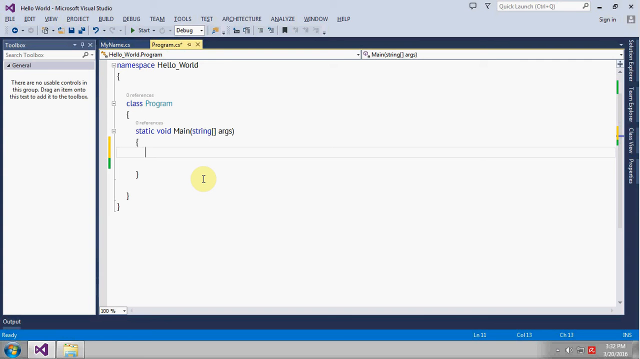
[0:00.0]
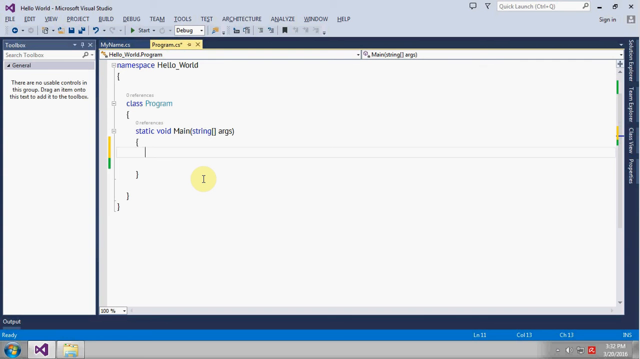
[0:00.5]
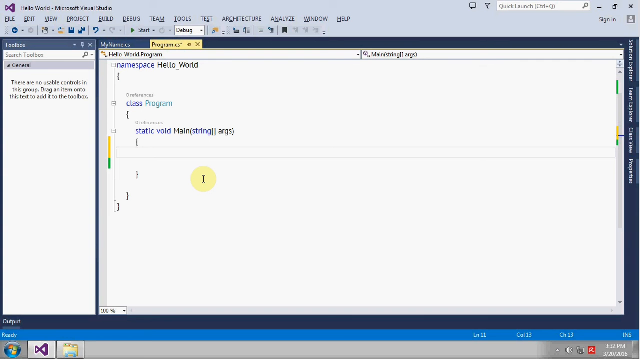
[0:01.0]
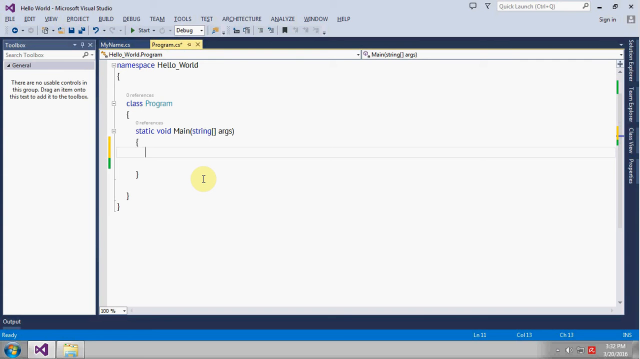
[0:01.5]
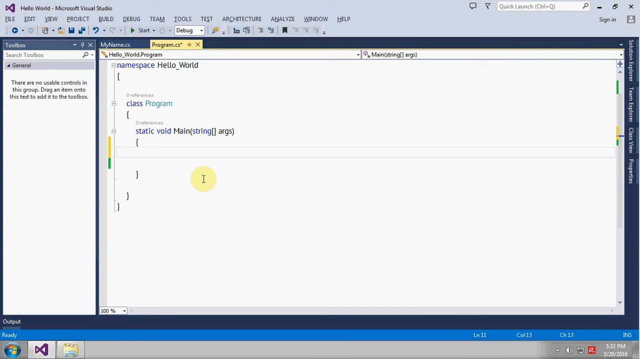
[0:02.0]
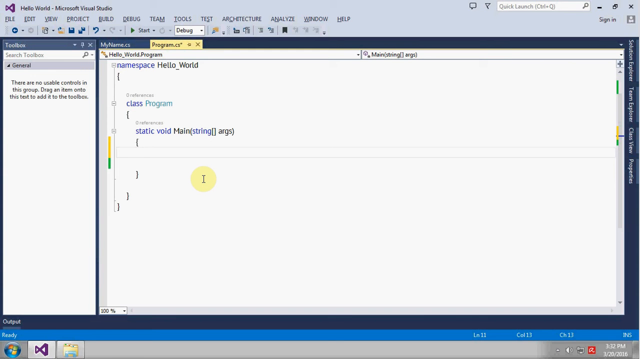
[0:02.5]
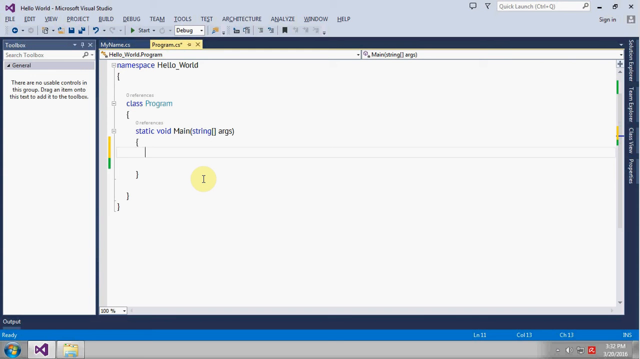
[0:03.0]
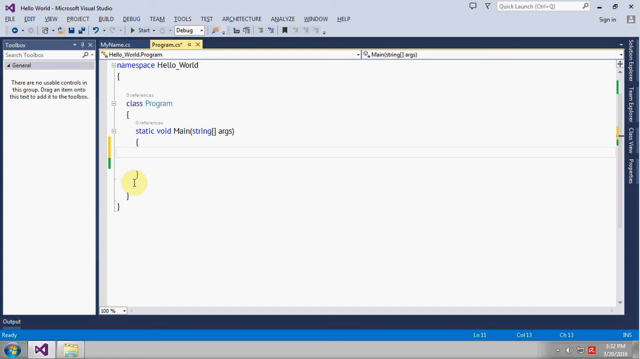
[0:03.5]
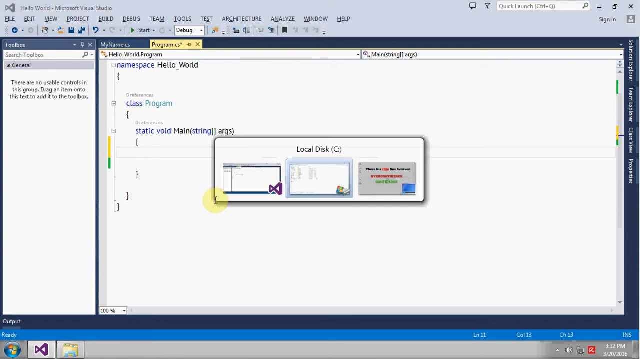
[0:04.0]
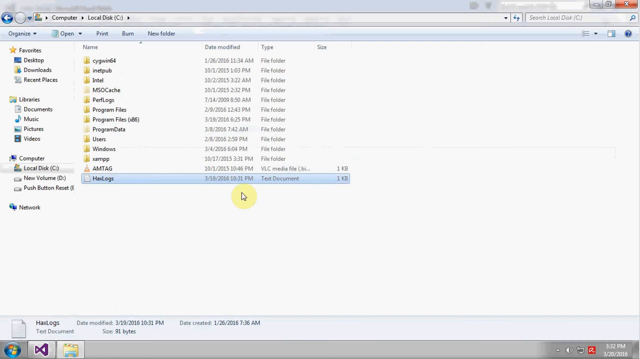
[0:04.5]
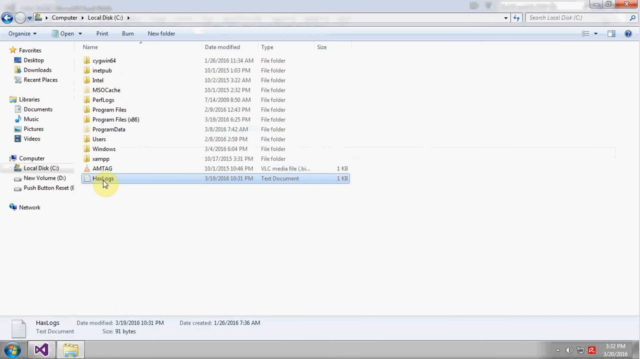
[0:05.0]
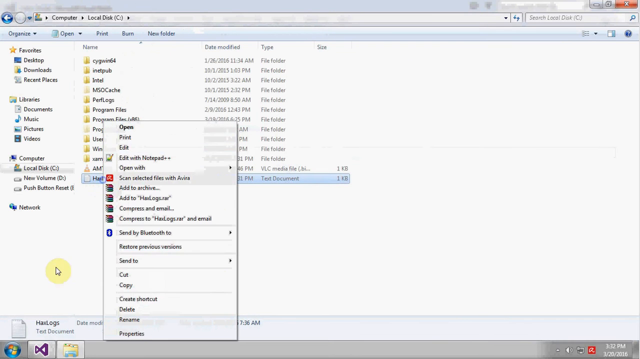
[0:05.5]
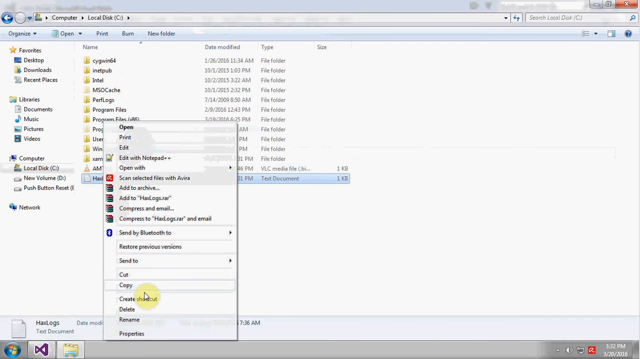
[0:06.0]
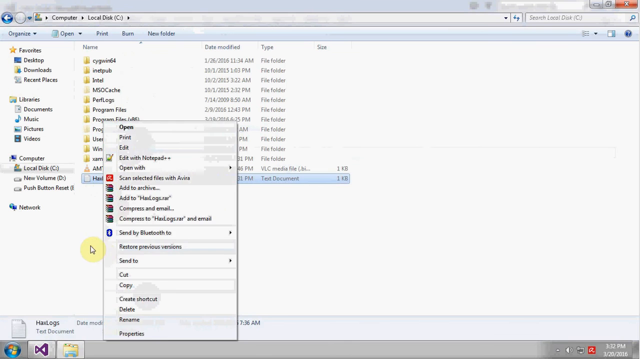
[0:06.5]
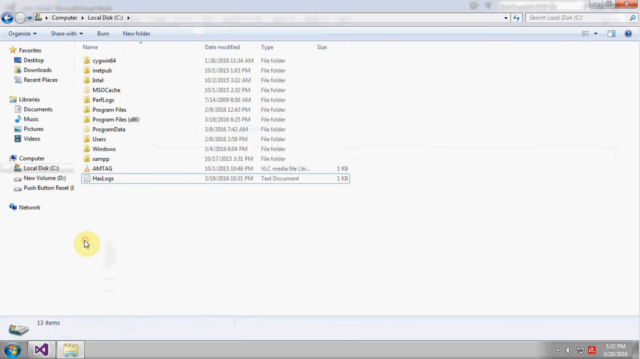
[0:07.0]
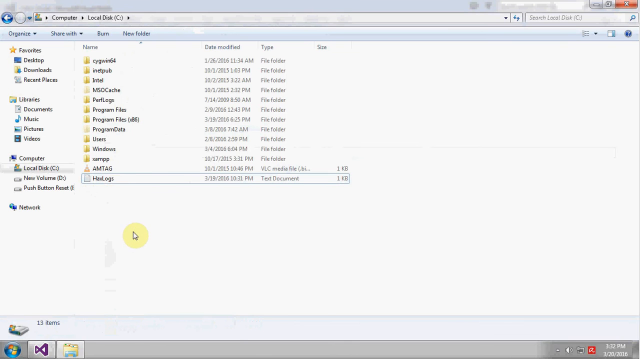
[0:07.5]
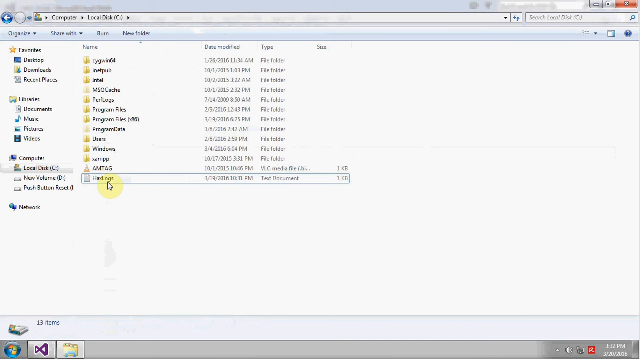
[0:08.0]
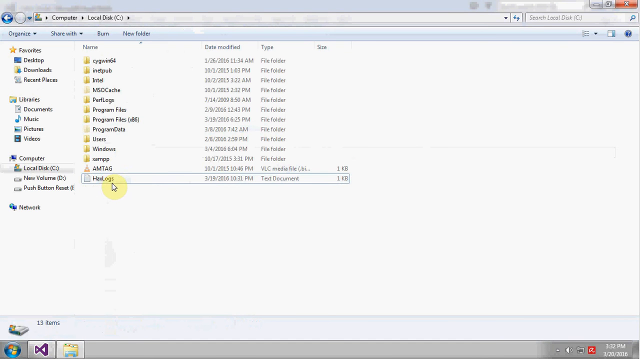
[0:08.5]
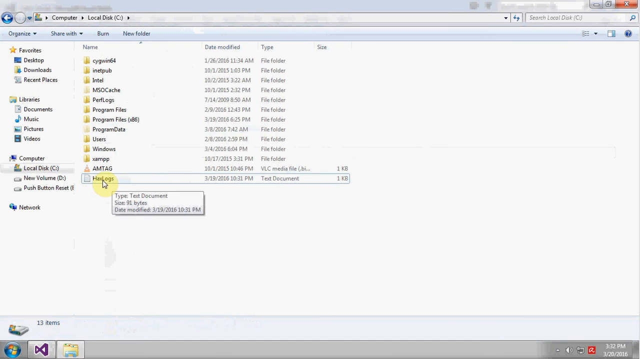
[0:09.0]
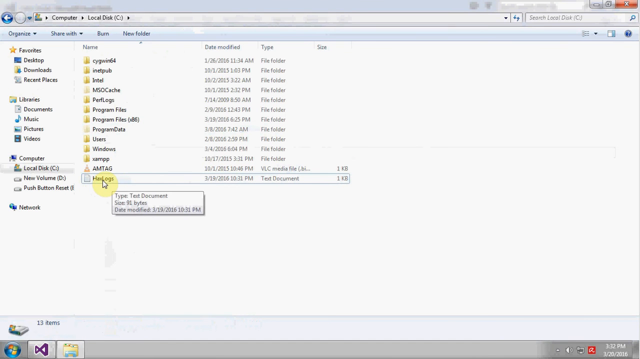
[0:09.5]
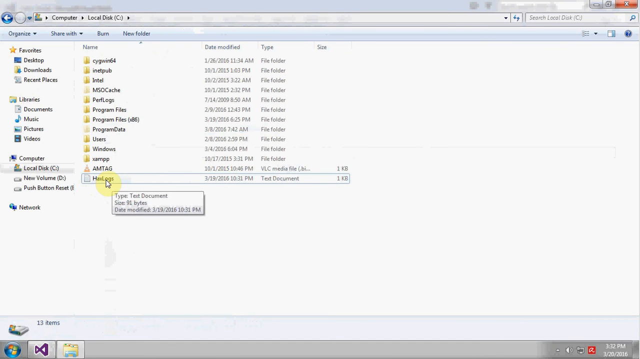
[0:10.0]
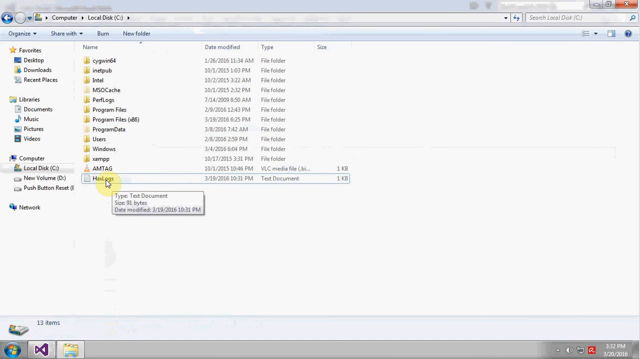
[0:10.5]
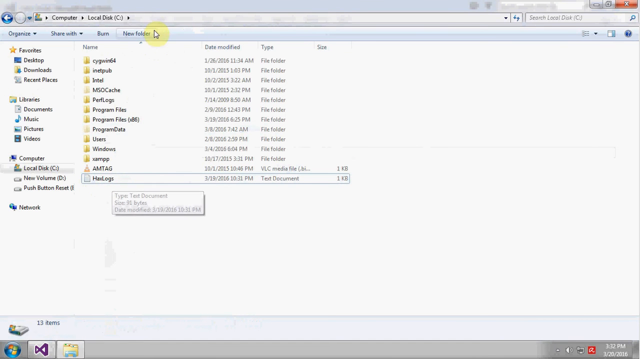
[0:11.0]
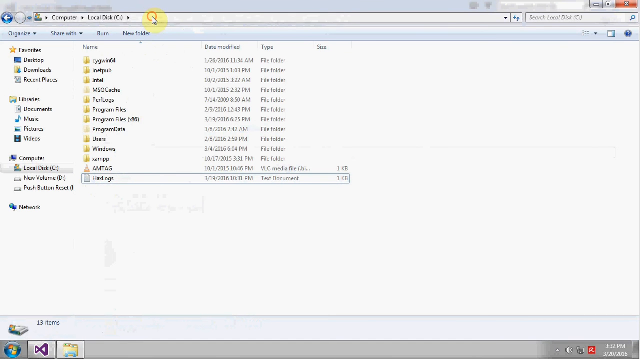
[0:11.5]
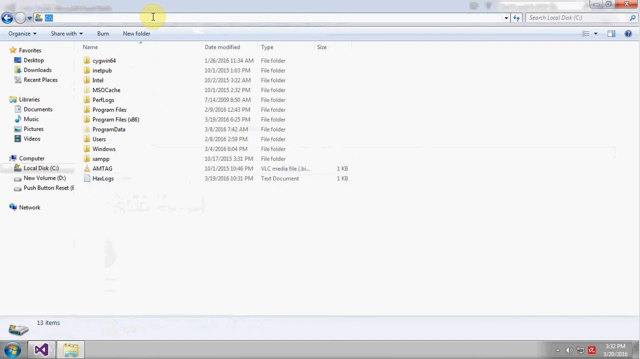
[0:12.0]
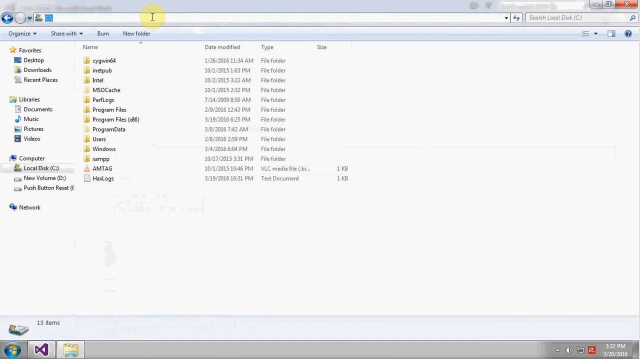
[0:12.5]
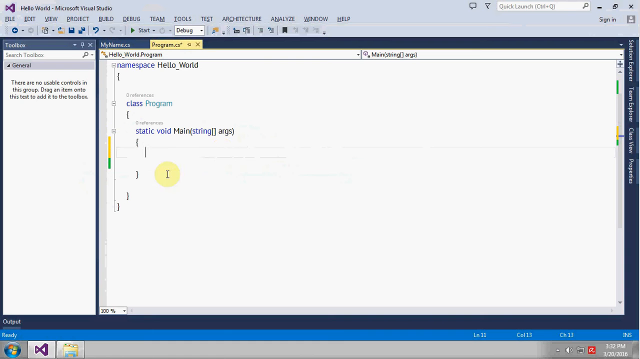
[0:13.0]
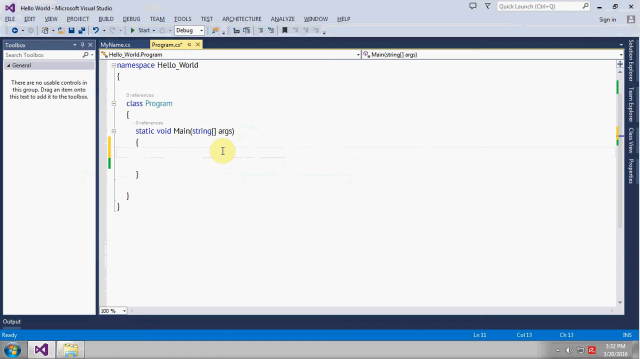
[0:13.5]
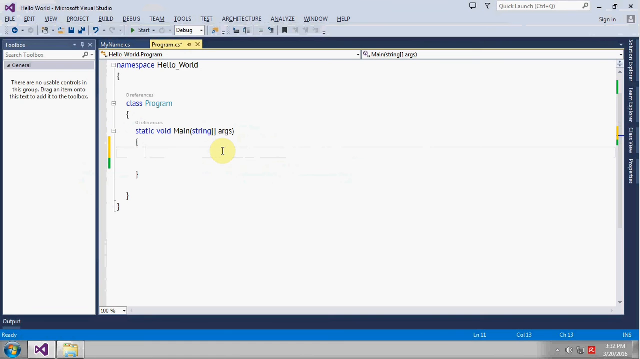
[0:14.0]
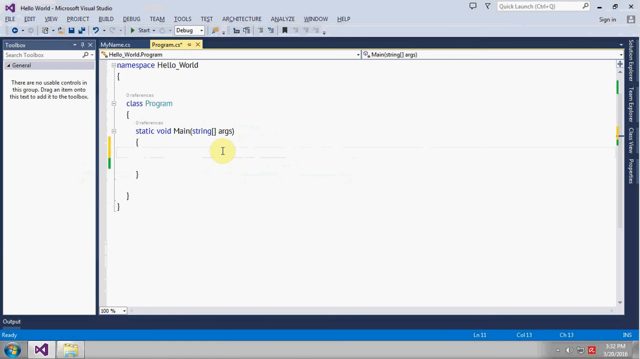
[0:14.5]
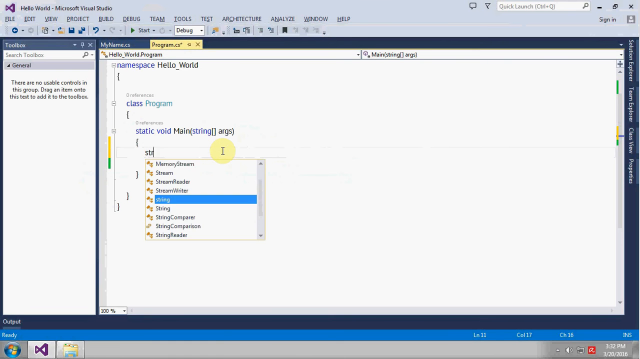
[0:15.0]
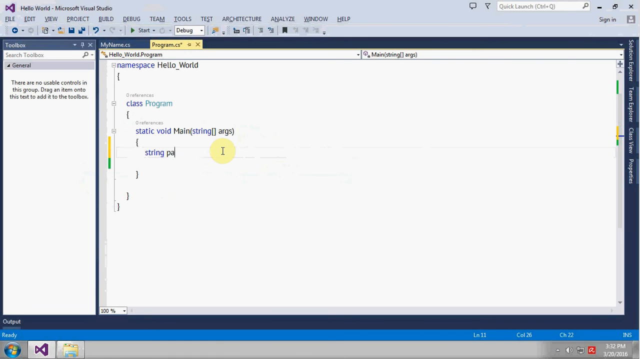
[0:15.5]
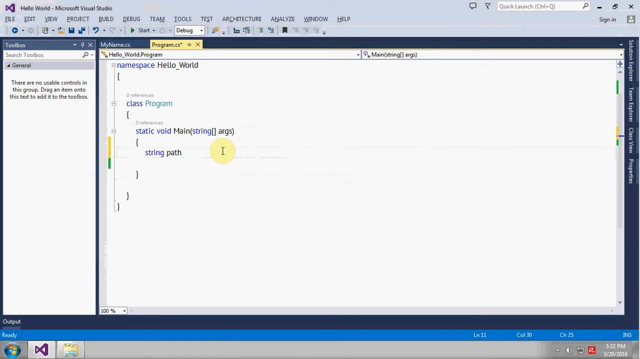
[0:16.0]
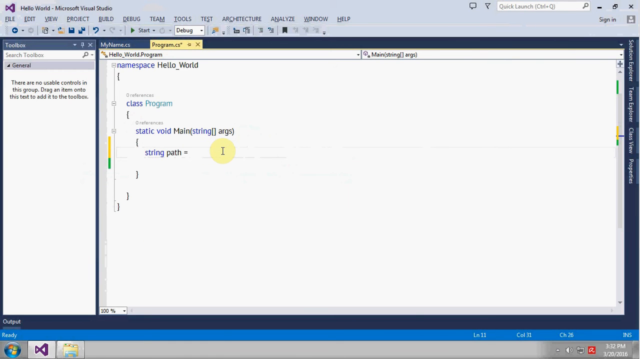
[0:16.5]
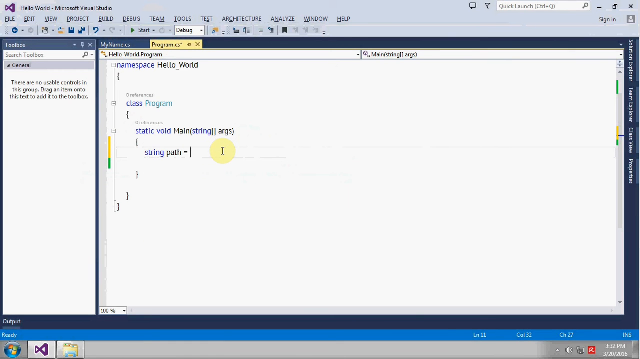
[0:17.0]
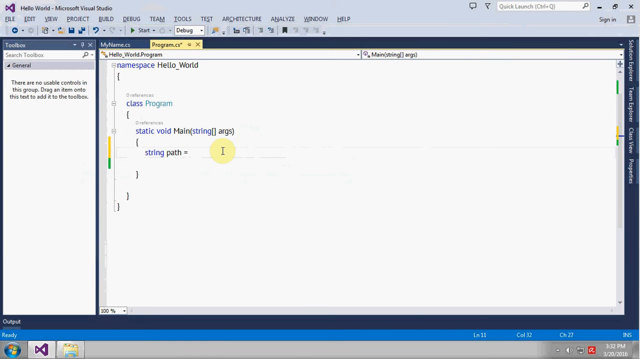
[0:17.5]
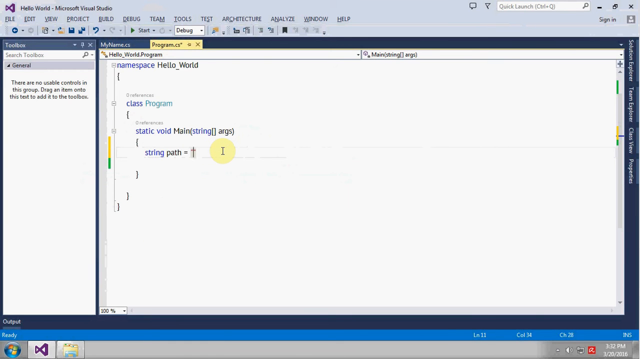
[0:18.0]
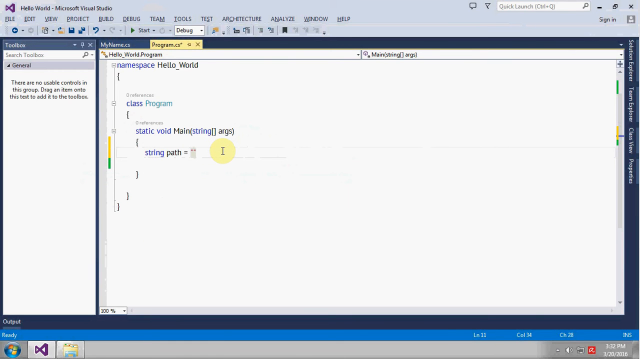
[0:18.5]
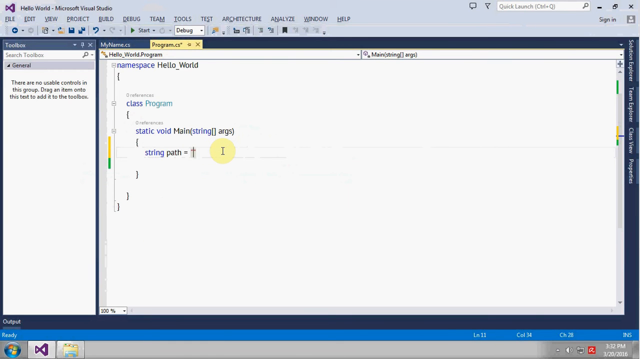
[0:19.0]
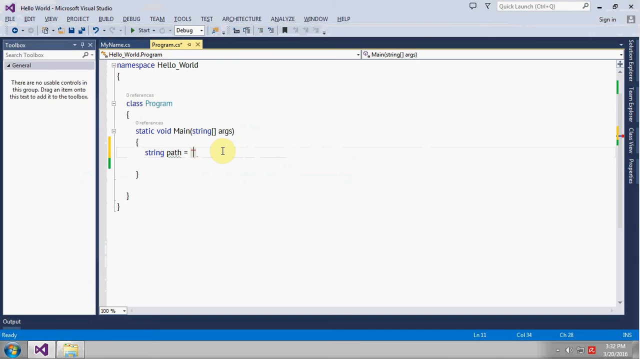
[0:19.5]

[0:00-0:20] Microsoft Visual Studio is open on Windows 7, with a file called hello_world. The program contains code reading "namespace hello_world", with "class program" below it and then "static void main string args". The cursor wiggles about, and then File Explorer is opened using Alt-Tab, where a file called has logs on the local disk C is viewed; it looks to be a text document. The view then Alt-Tabs back to Microsoft Visual Studio, and "string path" is typed into the script, followed by inverted commas. The computer is running an old version of Windows, Windows 7, and the Visual Studio version also looks to be an old one.